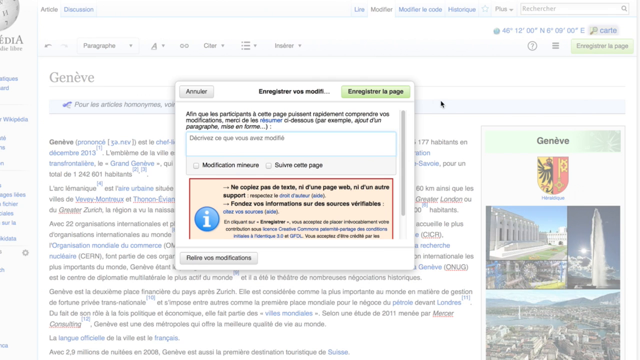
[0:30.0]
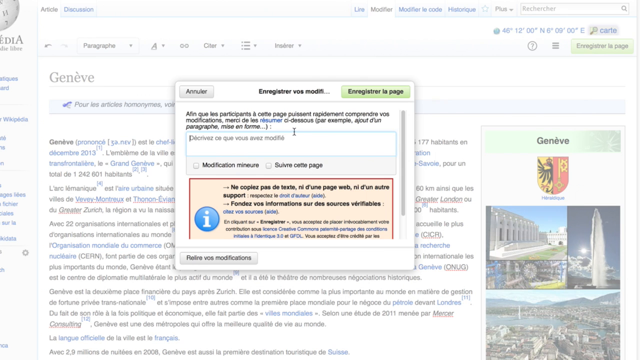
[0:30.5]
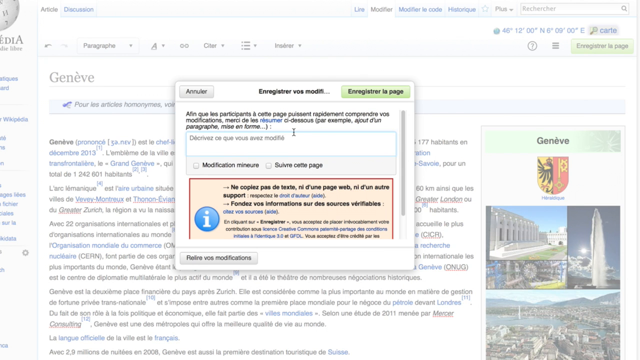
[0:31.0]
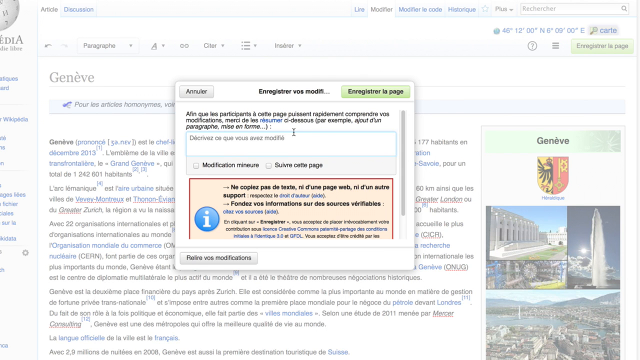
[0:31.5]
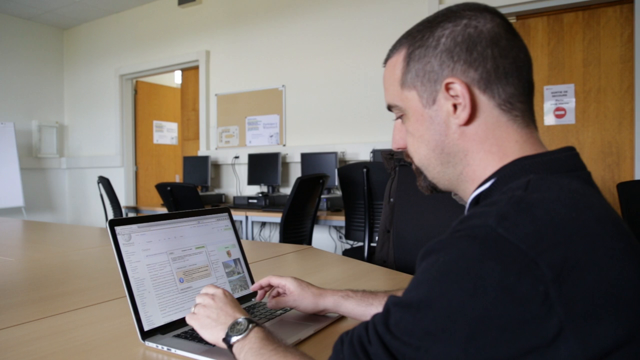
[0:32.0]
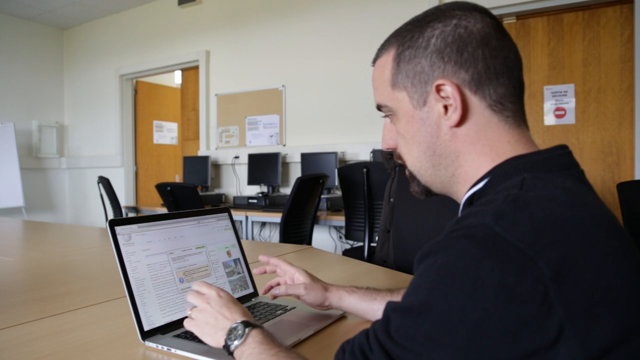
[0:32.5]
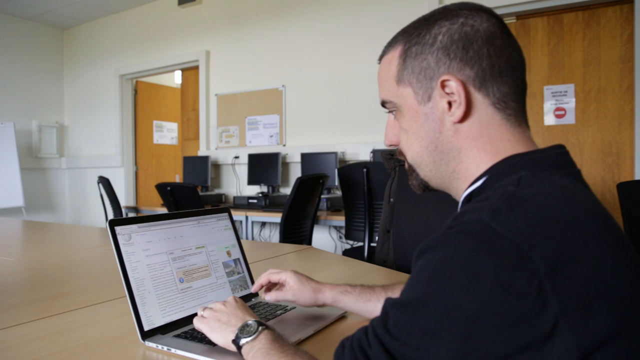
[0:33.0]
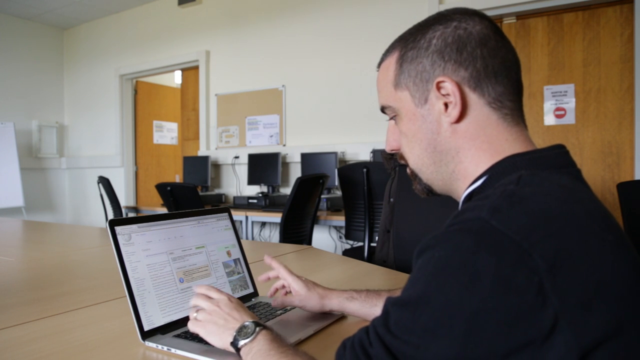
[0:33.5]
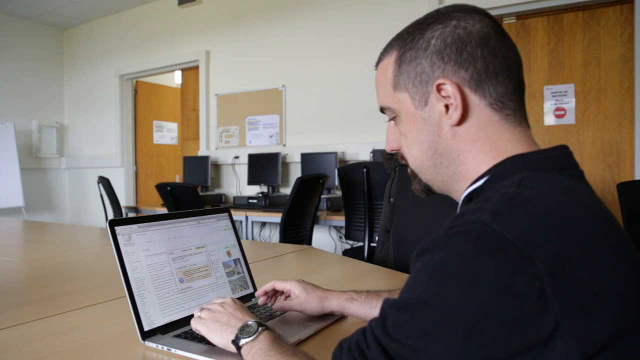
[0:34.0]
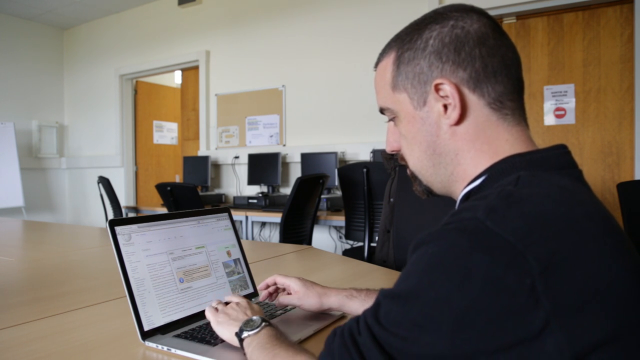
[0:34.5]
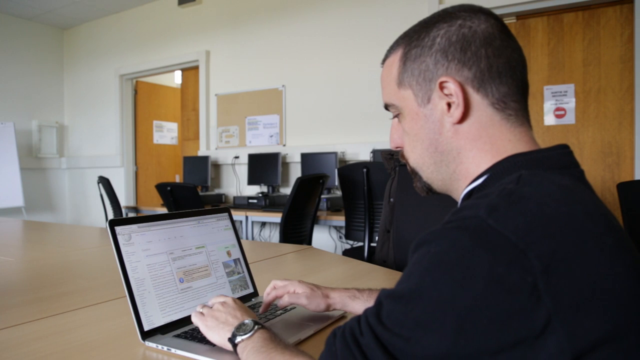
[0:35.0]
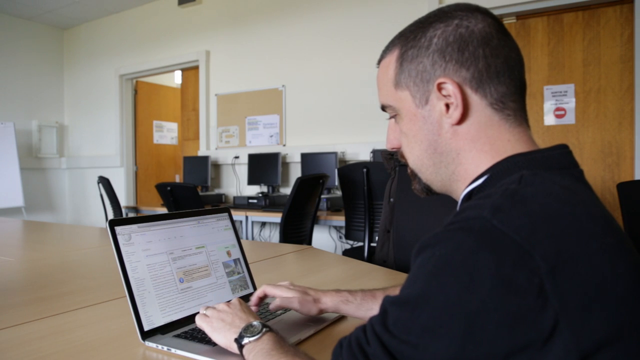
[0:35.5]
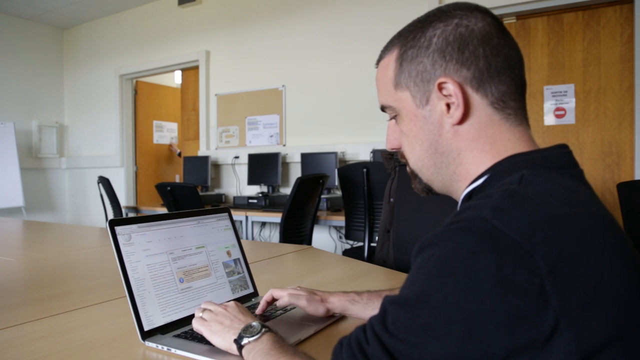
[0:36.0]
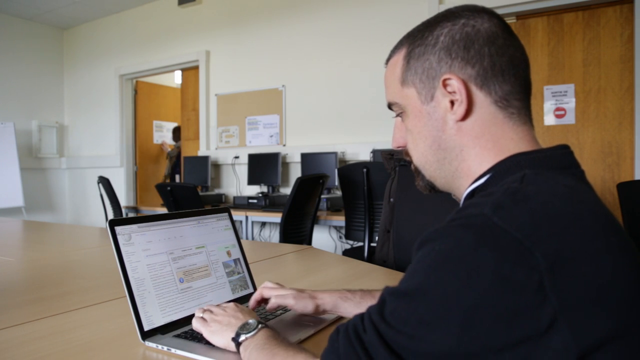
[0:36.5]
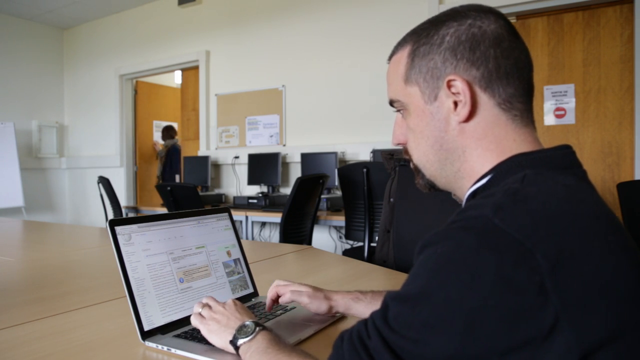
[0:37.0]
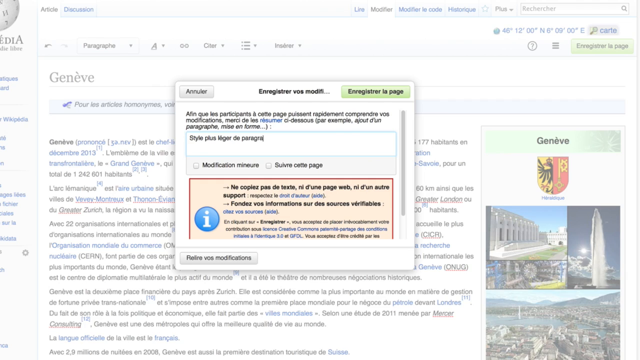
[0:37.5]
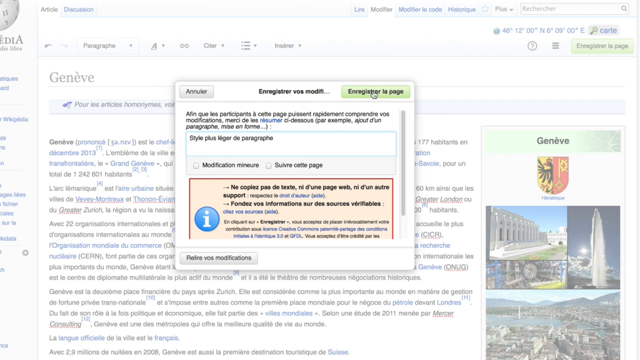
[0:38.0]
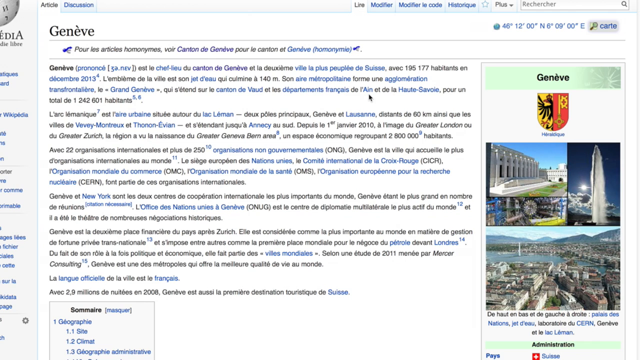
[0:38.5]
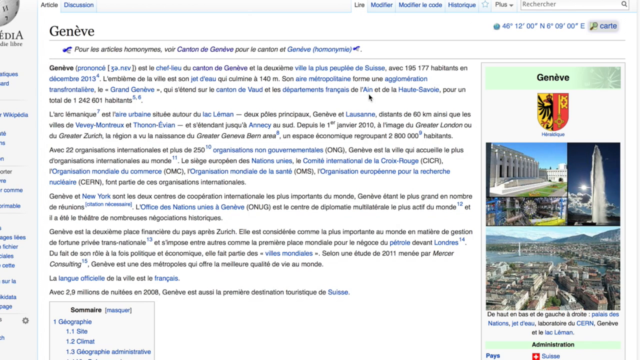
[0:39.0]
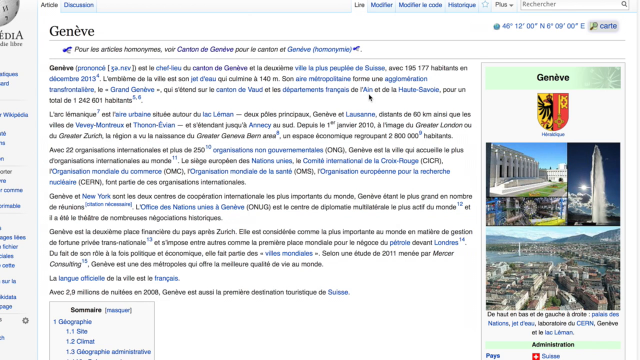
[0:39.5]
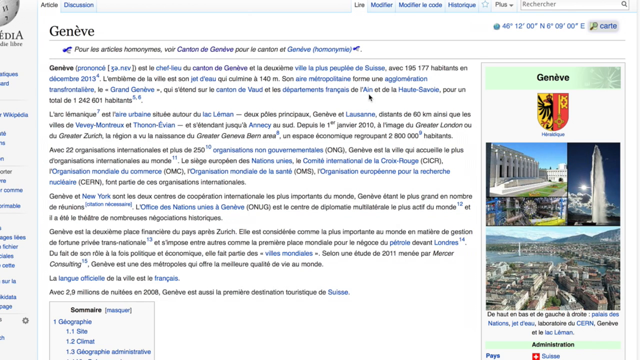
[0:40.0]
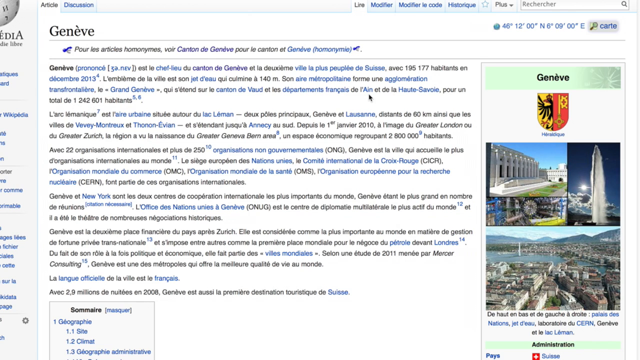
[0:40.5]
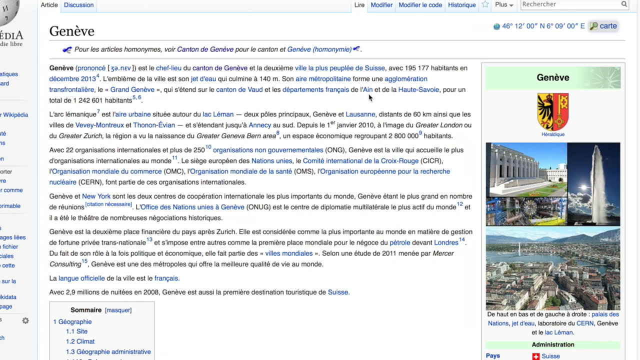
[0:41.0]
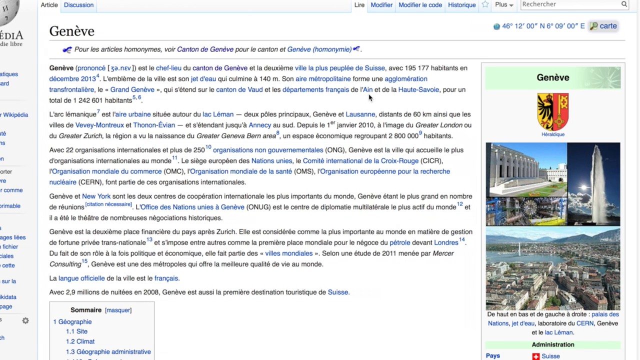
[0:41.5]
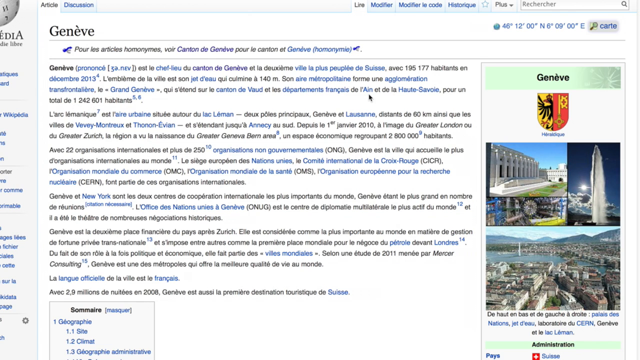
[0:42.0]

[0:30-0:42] The man, a Caucasian male with brown hair and a brown goatee in a black polo shirt, looks at his computer screen, which is on a long wooden table. On the screen is the pop-up that appears to be an error message. There are two wooden doors in the back, and someone very briefly walks into the frame through them. The video quickly switches back to the computer screen showing the Geneva Wikipedia page. He types something into the box that had presumably given the error message, and then the box goes away, leaving the entire Wikipedia page in view.